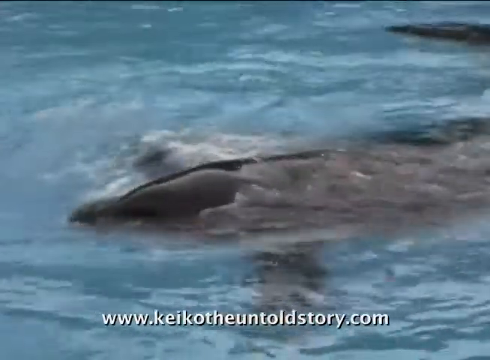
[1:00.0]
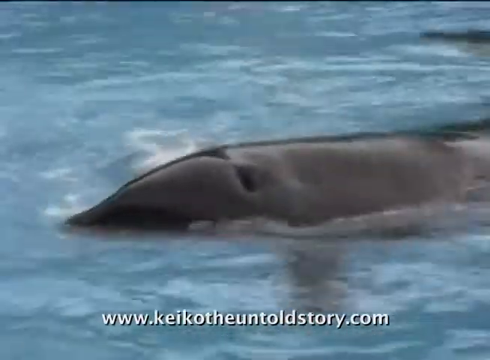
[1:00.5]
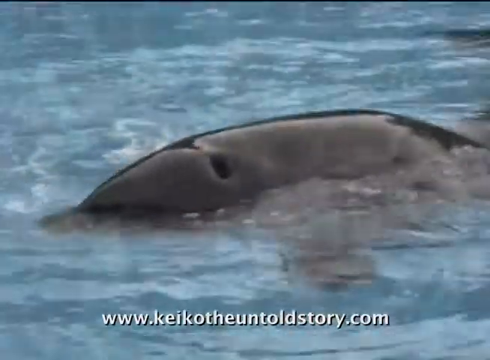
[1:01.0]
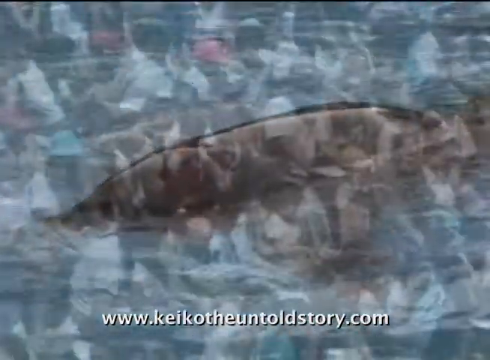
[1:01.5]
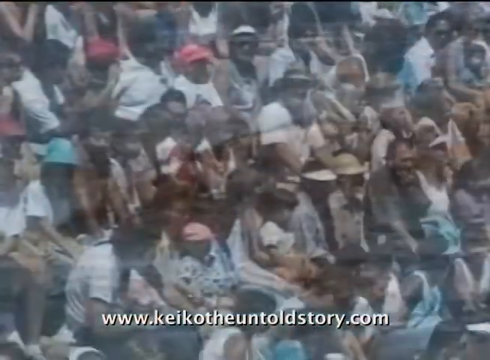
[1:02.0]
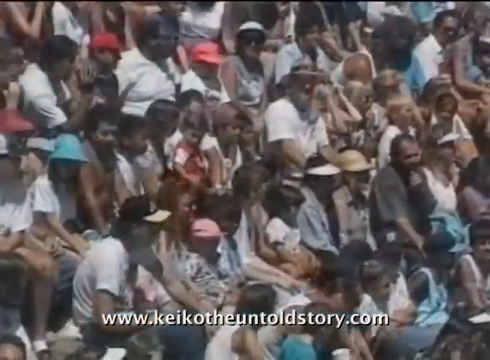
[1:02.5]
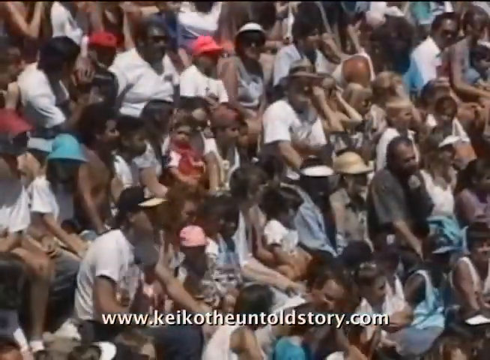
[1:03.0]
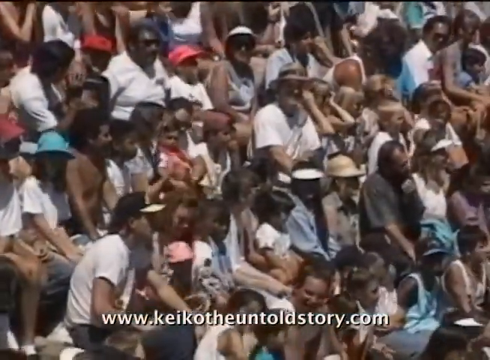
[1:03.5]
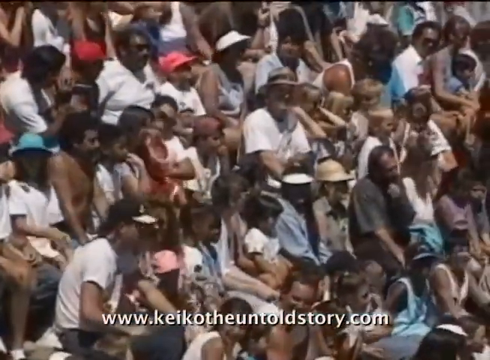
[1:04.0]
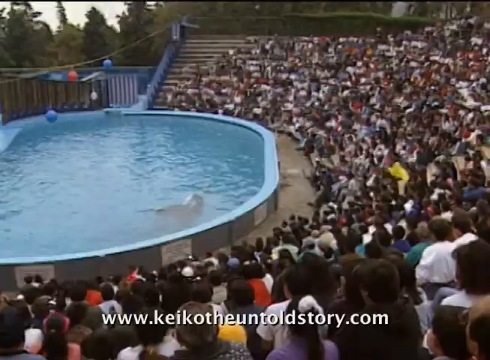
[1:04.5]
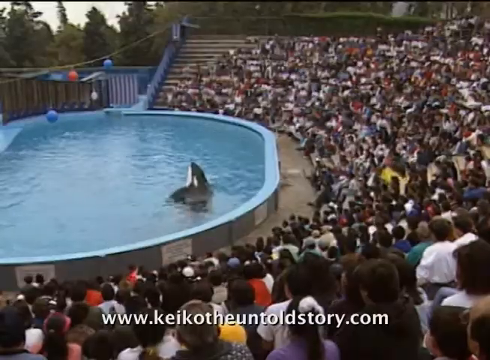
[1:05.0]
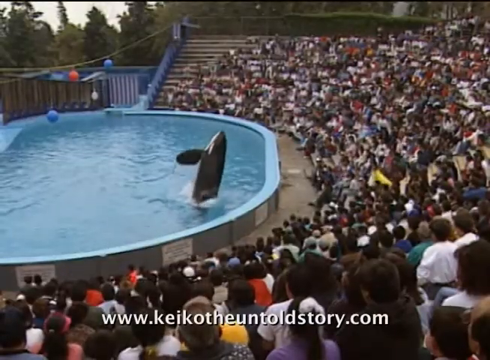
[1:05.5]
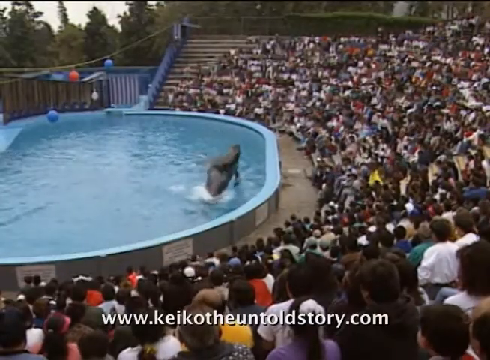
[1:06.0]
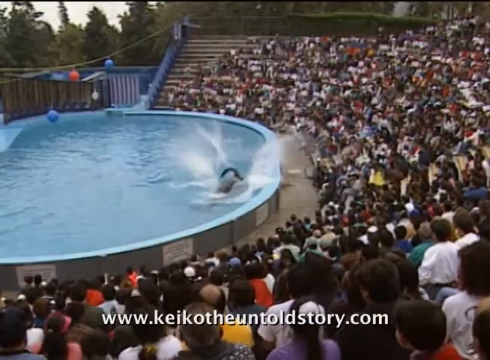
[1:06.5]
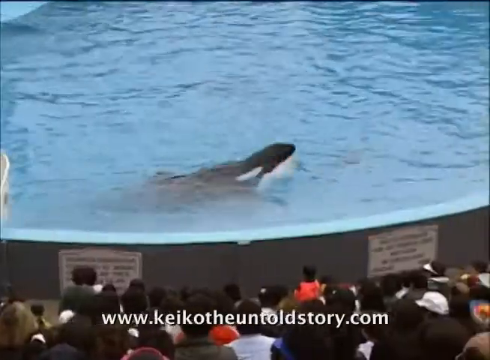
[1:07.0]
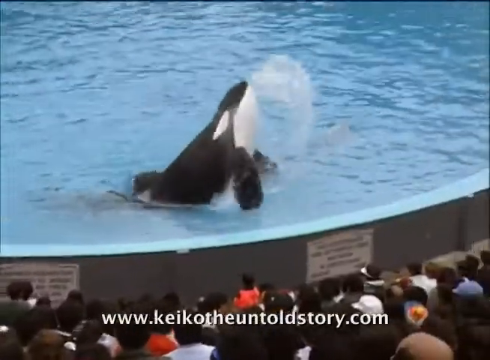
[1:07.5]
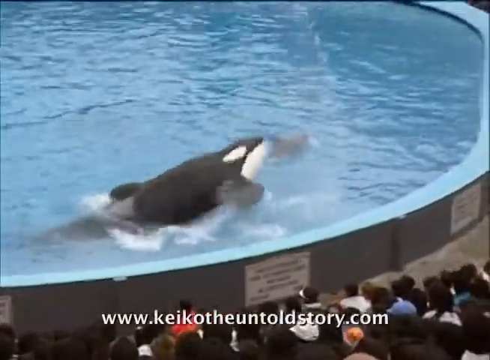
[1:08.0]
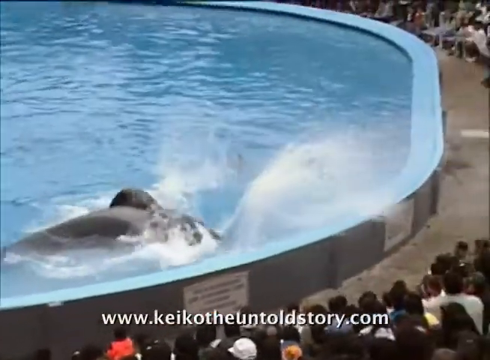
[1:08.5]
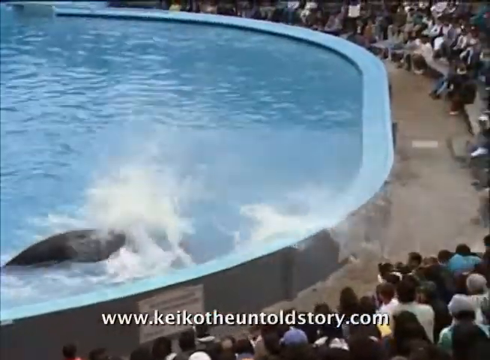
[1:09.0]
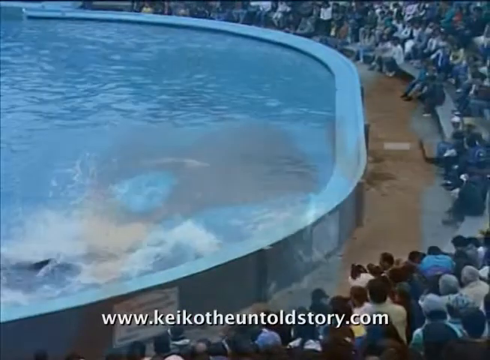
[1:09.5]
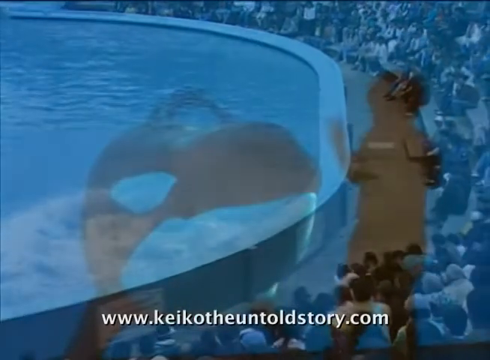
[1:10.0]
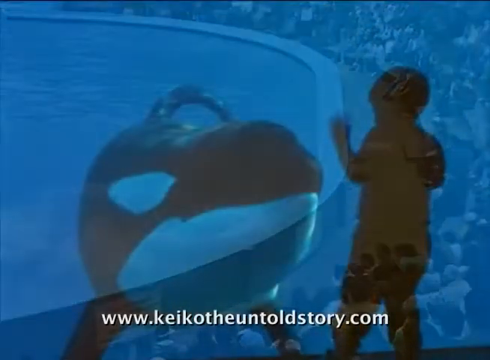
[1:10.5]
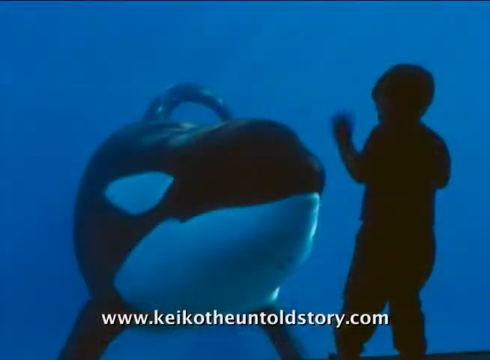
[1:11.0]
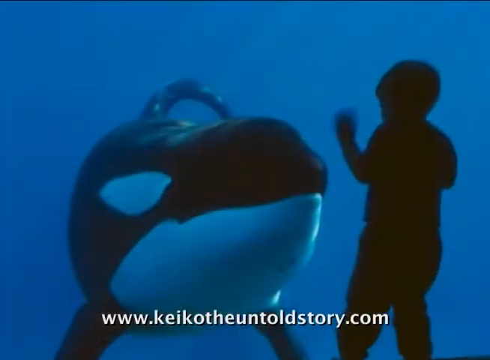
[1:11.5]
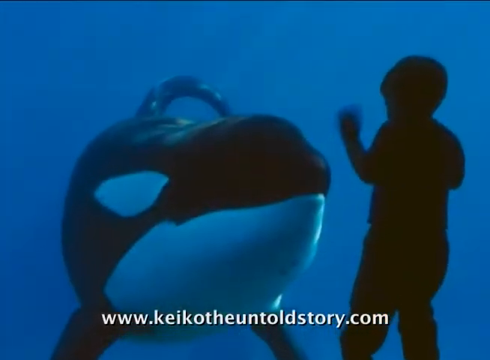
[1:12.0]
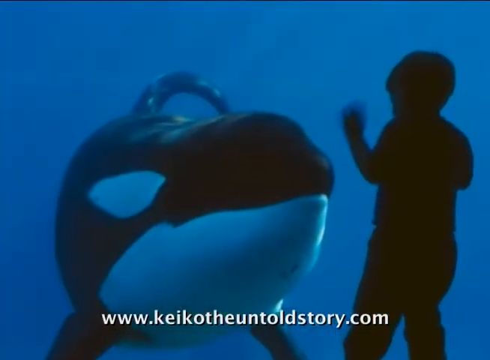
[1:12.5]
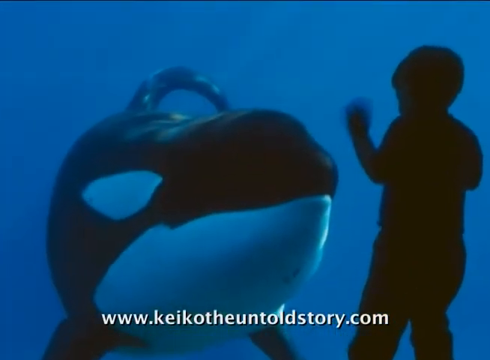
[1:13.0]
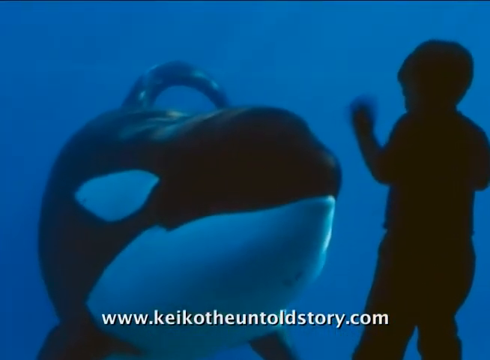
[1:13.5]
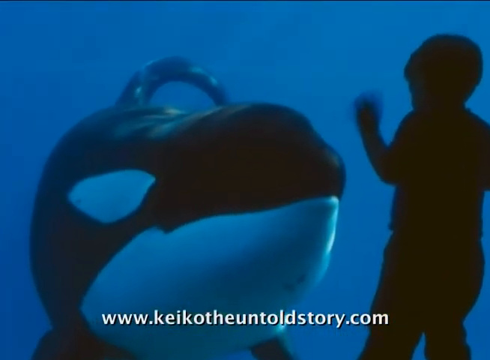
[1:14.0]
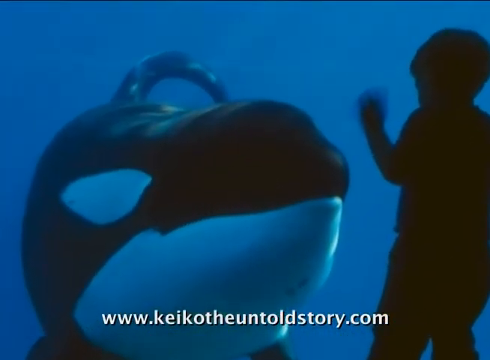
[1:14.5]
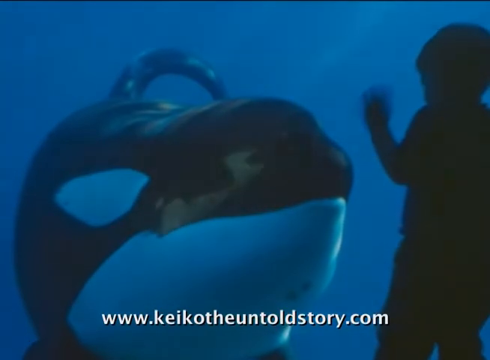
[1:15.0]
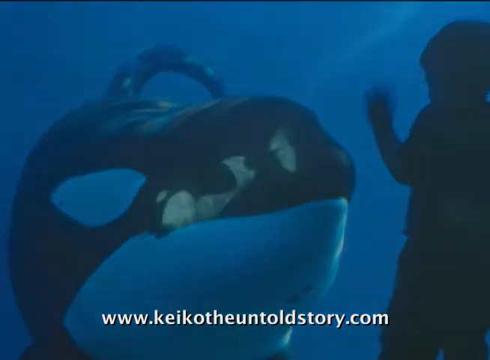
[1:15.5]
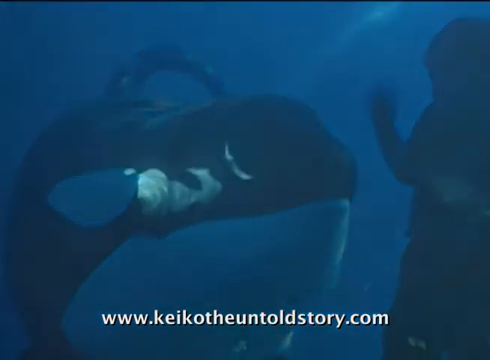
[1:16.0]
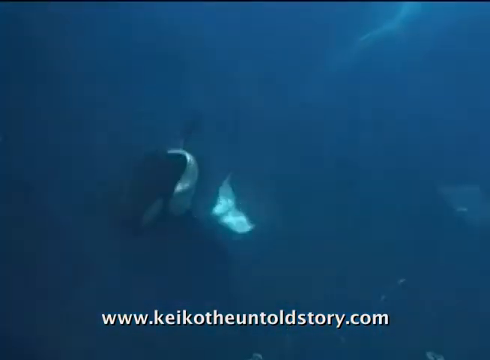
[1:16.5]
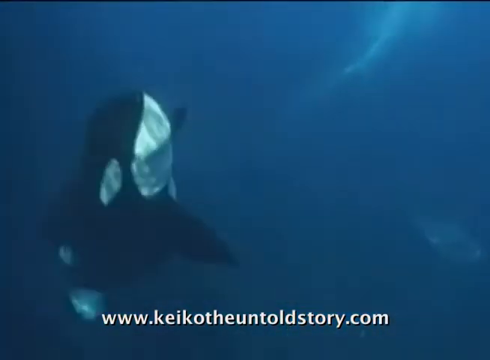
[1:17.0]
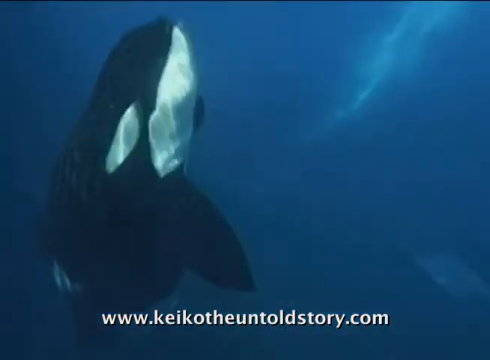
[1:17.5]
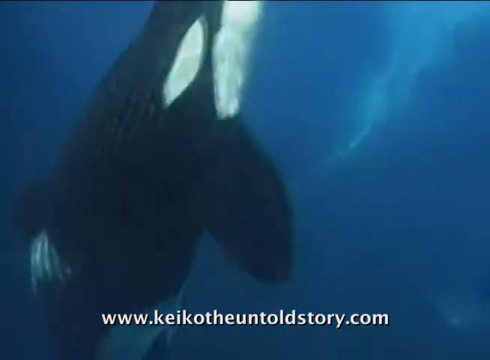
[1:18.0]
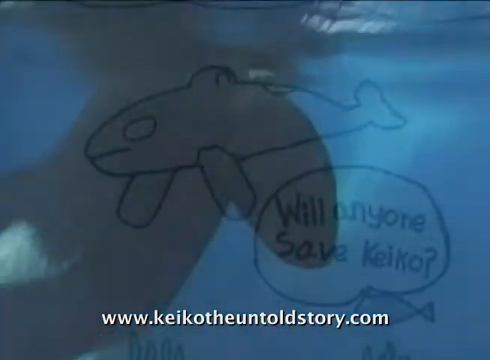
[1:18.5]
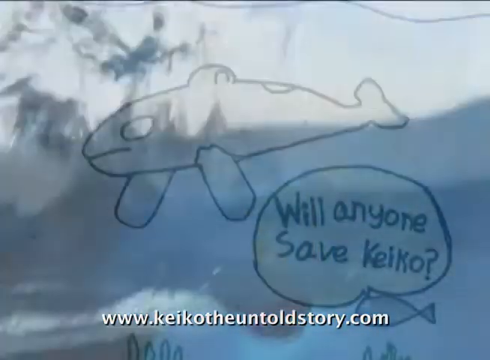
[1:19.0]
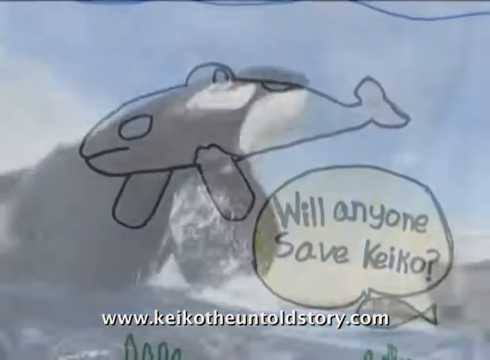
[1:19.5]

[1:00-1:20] The orca is in the pool; the water is clear and blue and the top of the orca is black. Text at the bottom of the screen says "www.keikoTheUntoldStory.com." The shot switches to an audience filled with people, many wearing hats, seated on stands. Another shot shows the stands nearly packed with people, with an oval blue pool to the left at the bottom of the stands. Above the pool, a string has blue, red, and white balls hanging from it. Pine trees and a washed-out sky are in the far background. The orca is in the pool with its nose sticking up out of the water, its white and black pattern visible. It jumps straight up out of the water with its fins extended, turning its body, then slaps down on its belly, making a massive splash that soaks the crowd. A close-up shows the edge of the pool, some of the fans in the stands, and the orca thrusting out of the water and spitting water into the air, then slapping down with a splash and disappearing as it swims under the water. The shot switches to a small child standing at a glass window that looks into the orca's pool; the orca is up against the glass looking at the boy as the boy looks at him. The boy is a silhouette on the right-hand side of the screen against a deep but bright blue background, and the orca's black and white markings are visible. Text at the bottom reads "www.keikotheuntoldstory.com." The shot pans in closer. Next, the orca swims through the water from the bottom to the top of the screen. The shot switches to a hand-drawn cartoon of an orca in the middle of the screen, with a cartoon fish in the bottom right-hand corner and a text bubble above it saying "Will anyone save Keiko?" An image of Keiko jumping through the air is superimposed in the background.